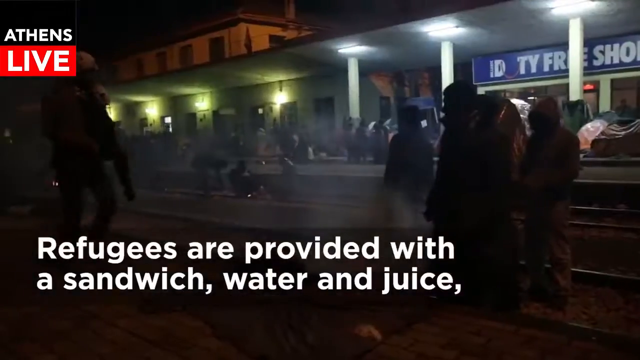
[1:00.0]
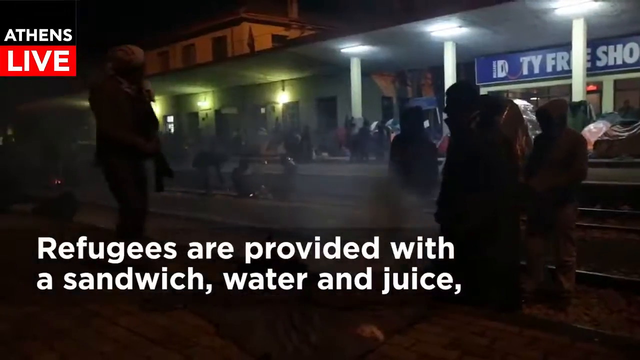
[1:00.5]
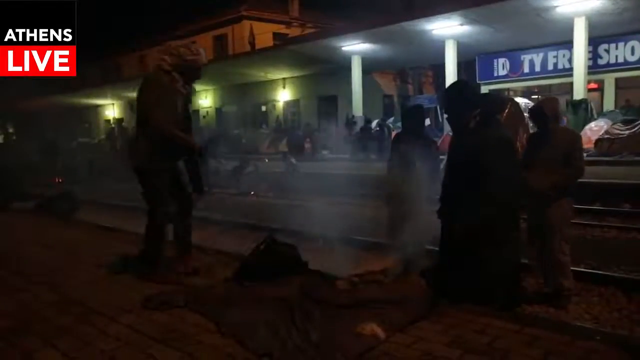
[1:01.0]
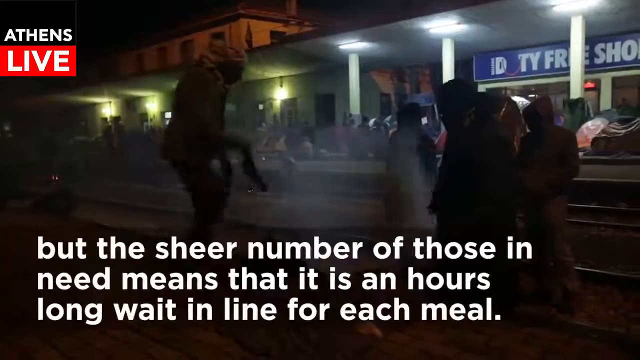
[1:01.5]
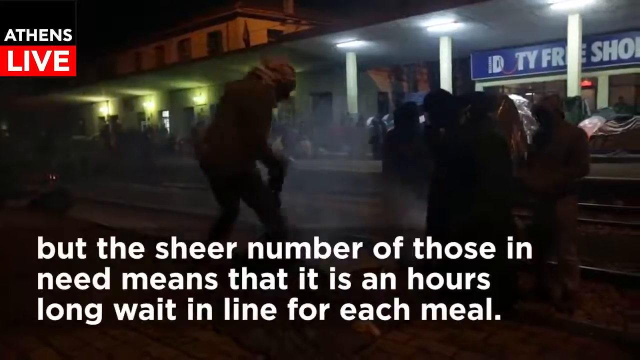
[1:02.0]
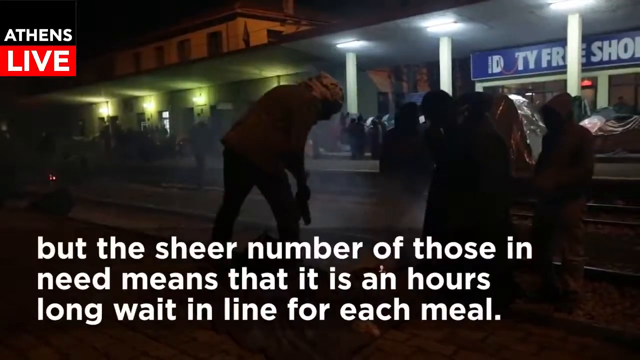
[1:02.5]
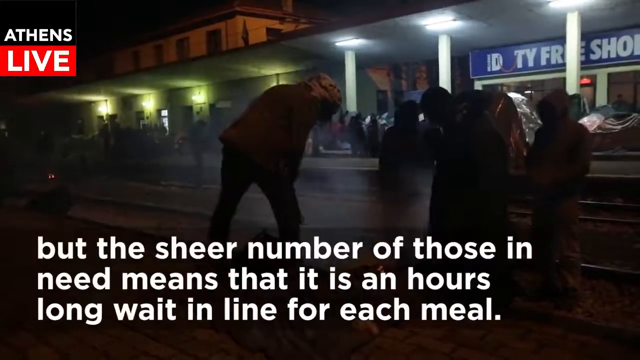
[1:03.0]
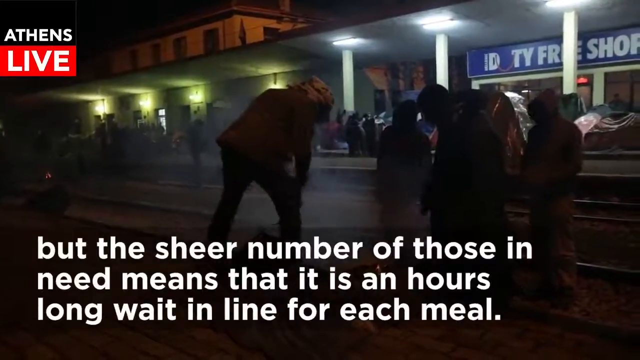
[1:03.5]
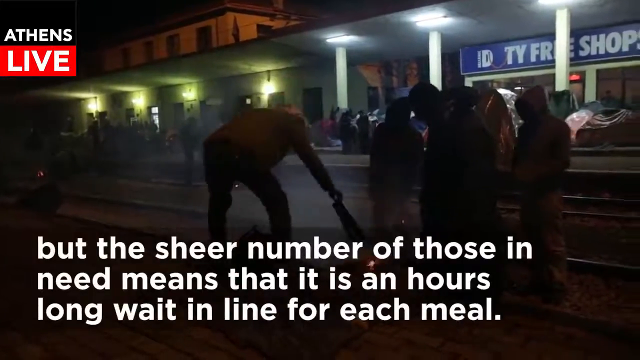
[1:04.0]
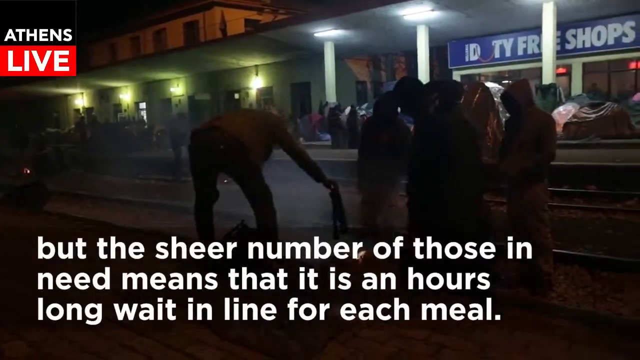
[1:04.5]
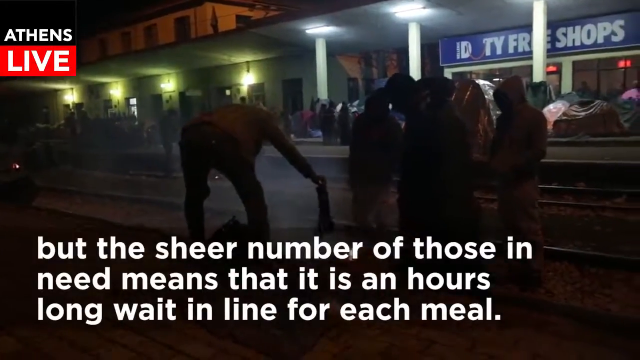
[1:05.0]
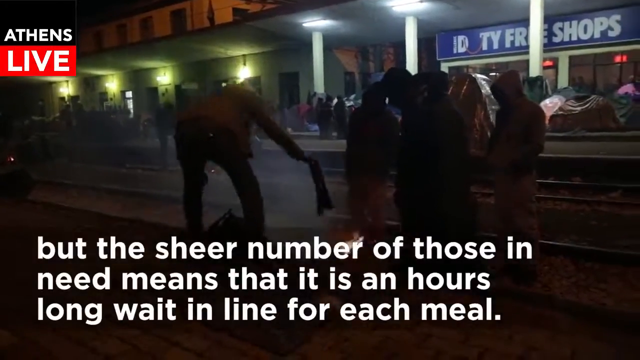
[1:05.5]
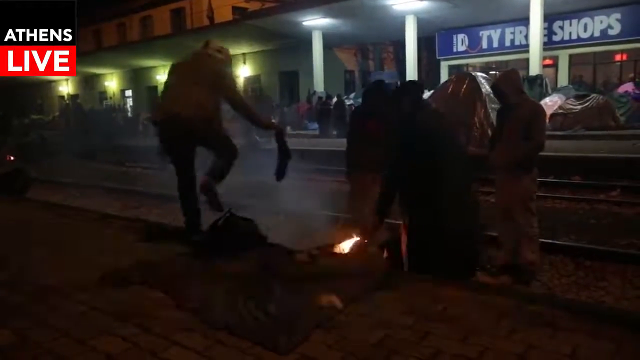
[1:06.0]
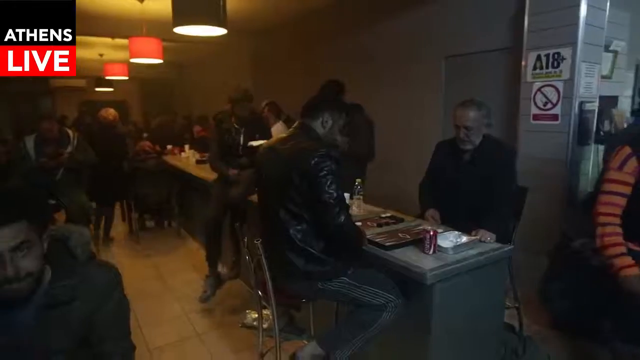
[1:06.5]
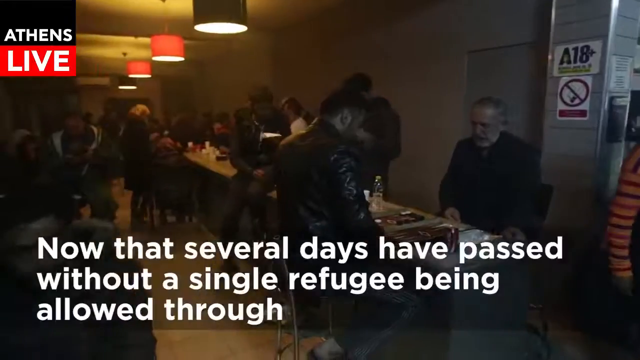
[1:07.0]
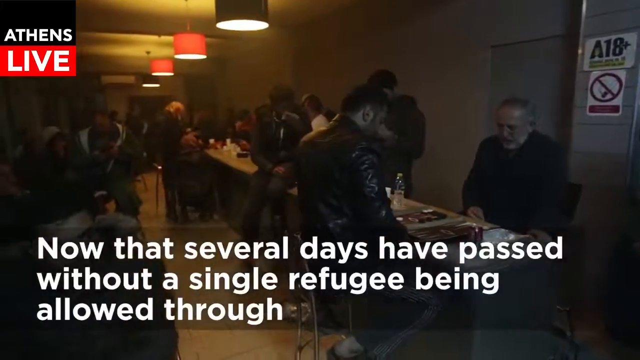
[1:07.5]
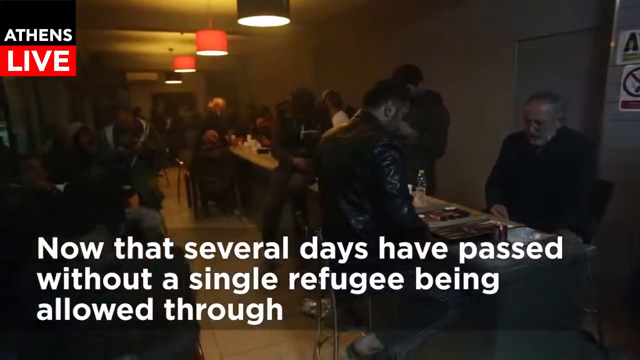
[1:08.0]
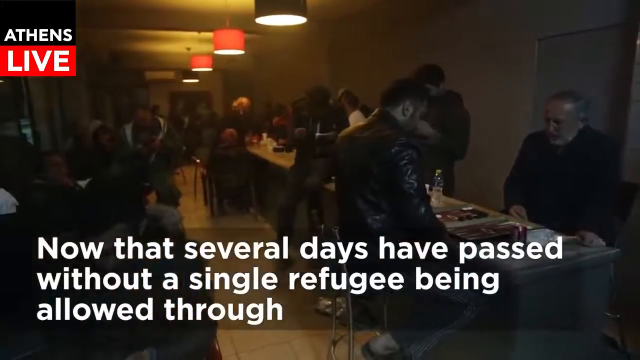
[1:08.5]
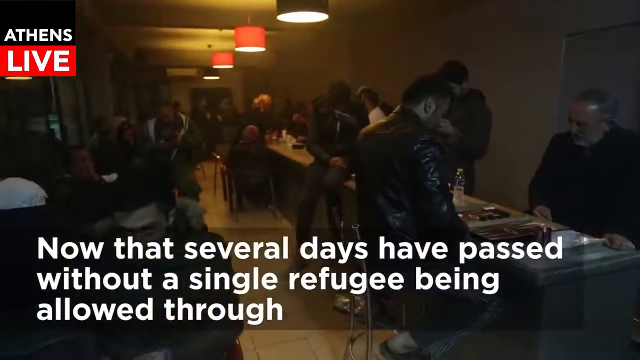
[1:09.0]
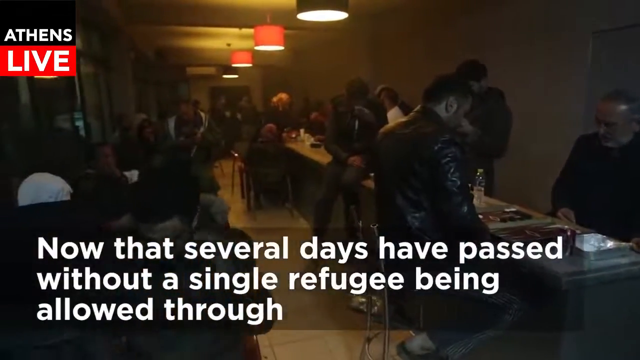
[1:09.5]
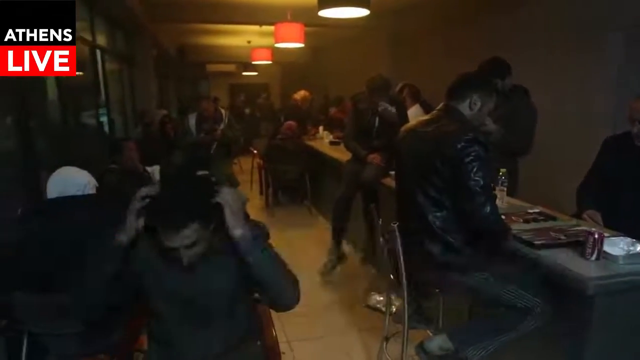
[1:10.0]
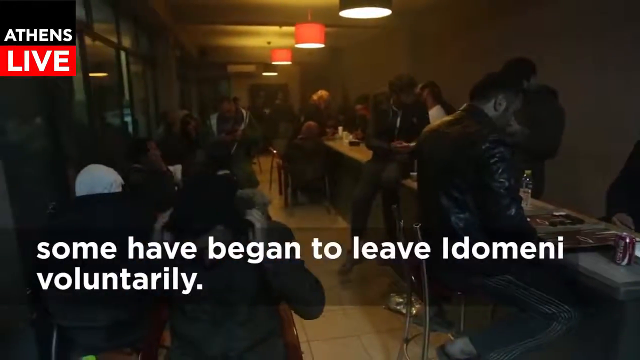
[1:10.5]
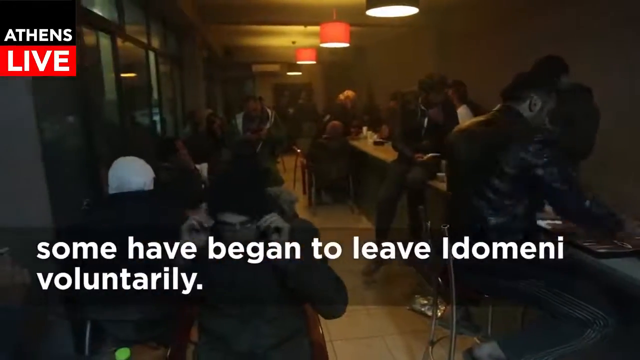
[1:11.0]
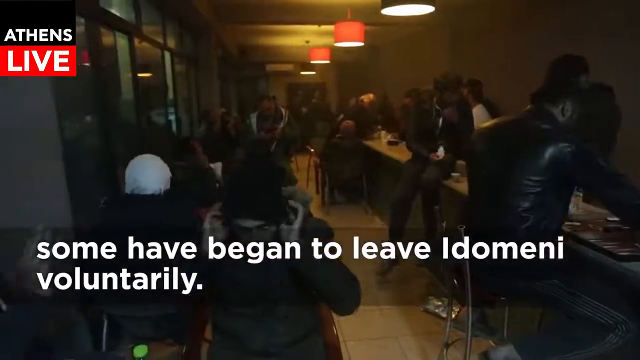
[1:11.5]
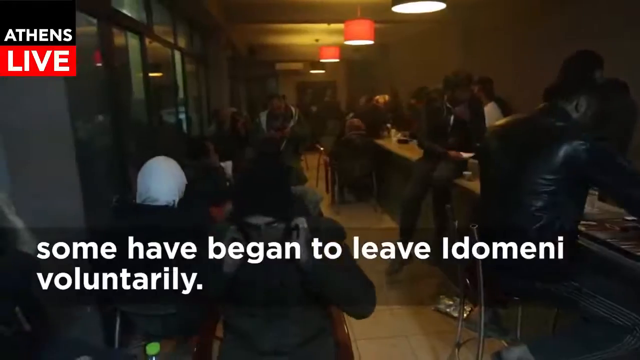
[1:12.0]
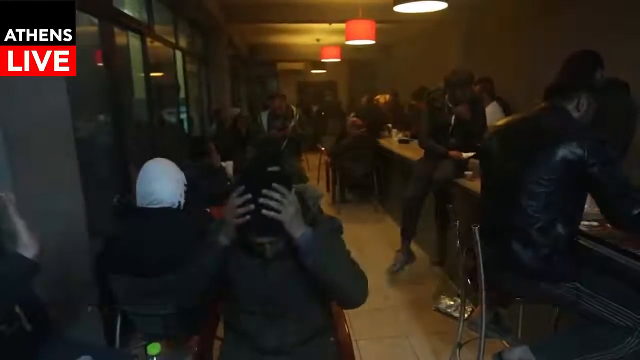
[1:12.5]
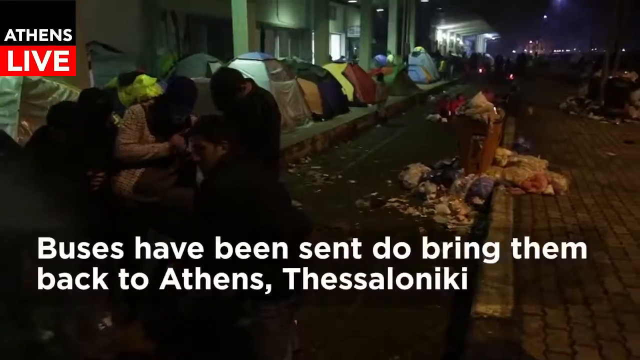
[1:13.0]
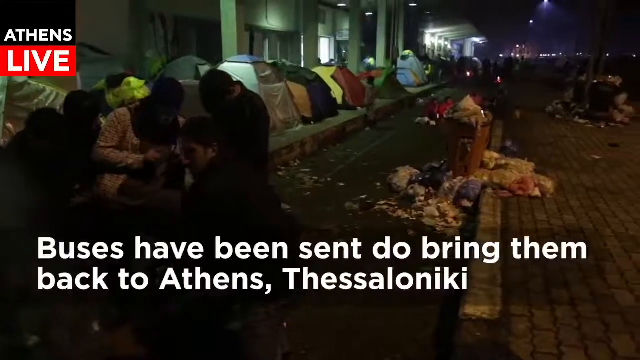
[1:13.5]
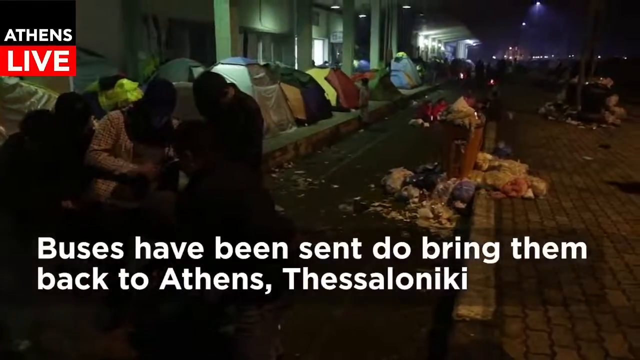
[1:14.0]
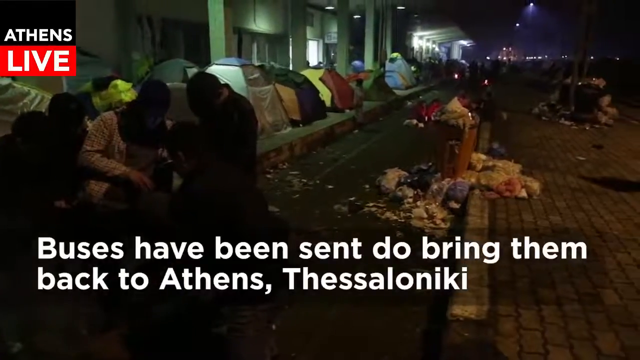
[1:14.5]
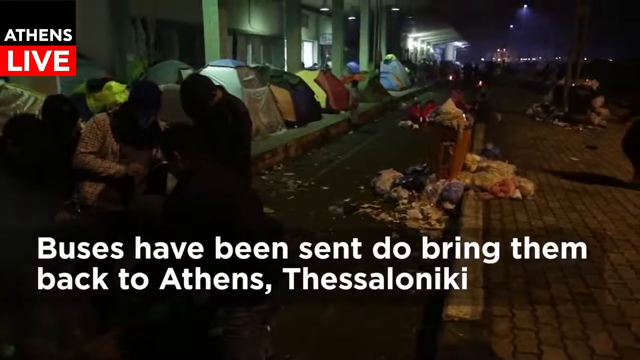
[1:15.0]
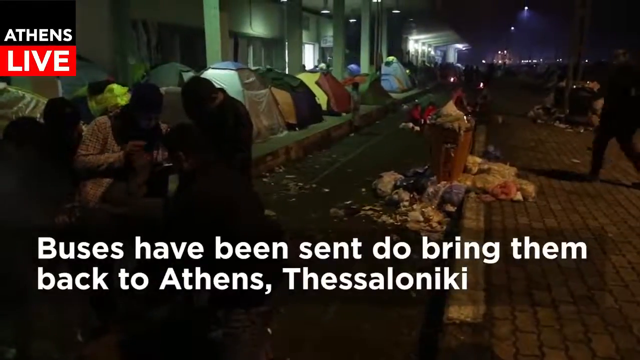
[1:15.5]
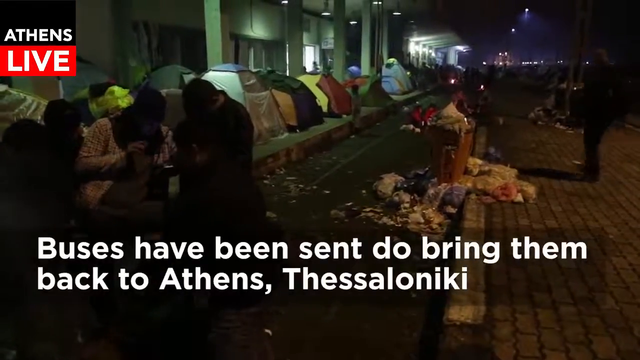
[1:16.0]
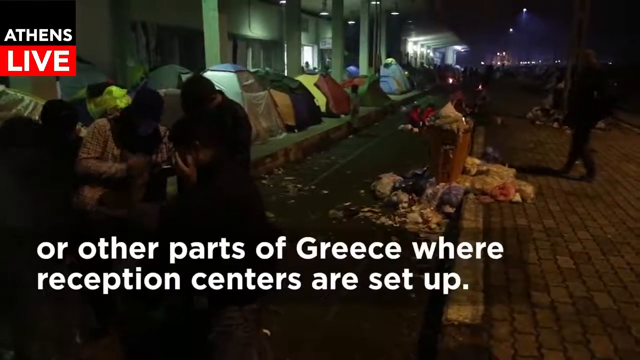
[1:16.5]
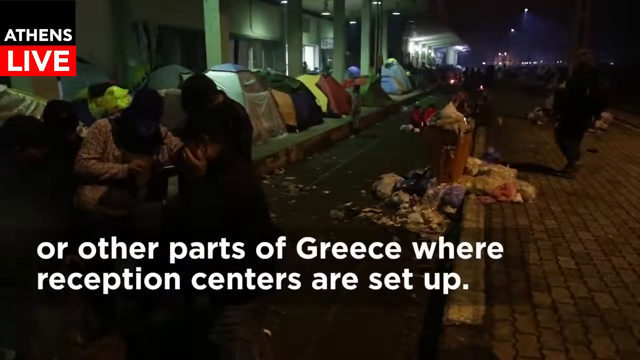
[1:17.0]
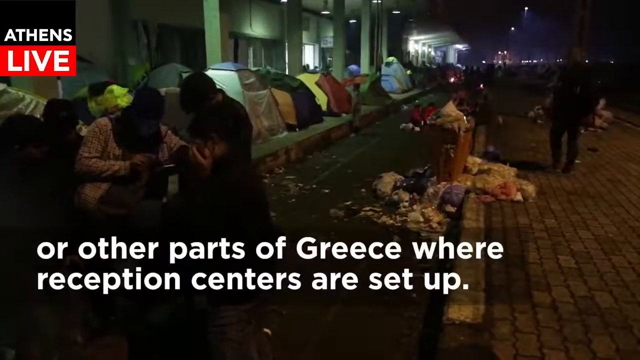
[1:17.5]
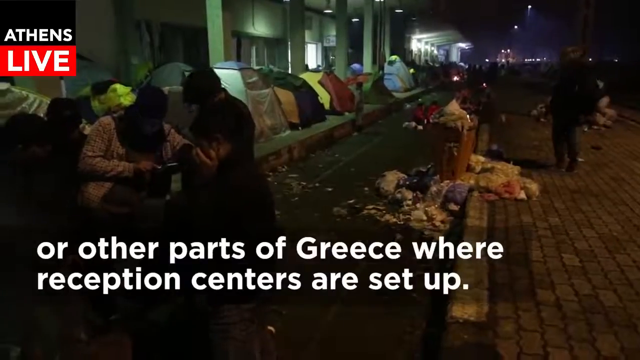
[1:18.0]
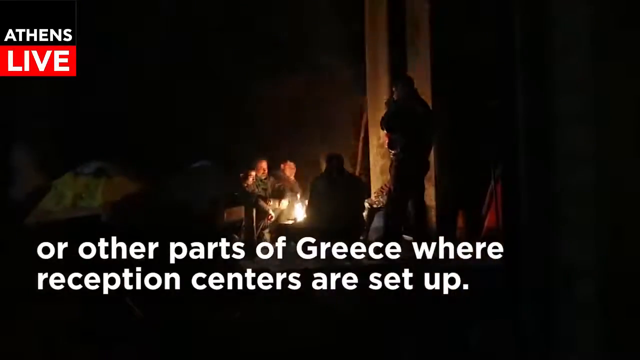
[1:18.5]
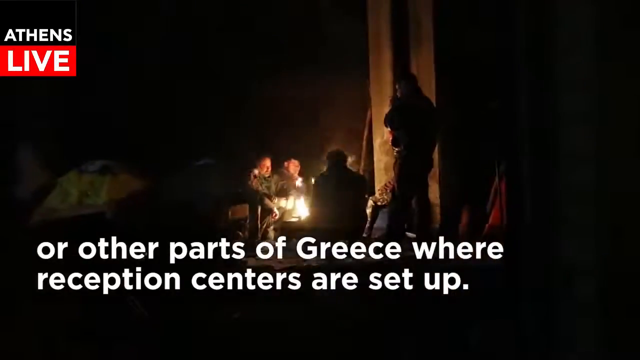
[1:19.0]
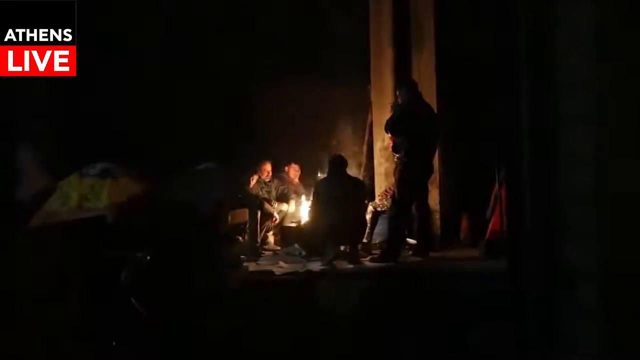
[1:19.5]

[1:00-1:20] More views and angles show the refugees and the area they are living in, mainly people on train tracks at a train station, with hundreds and hundreds of people in the area. People start a fire and smoke comes from it. Inside a building, tables are set up and rows of people sit at them. An outside view of the train station shows rows of tents and people. A caption reads: "refugees are provided with a sandwich, water, and juice", followed by "Now that several days have passed without a single refugee being allowed through, some have begun to leave voluntarily, and buses have been set to bring them back to Athens or other parts of Greece."